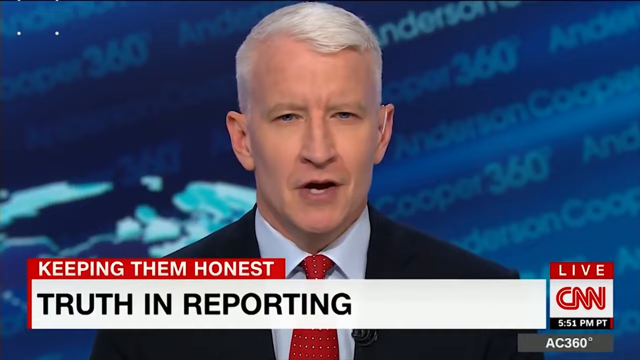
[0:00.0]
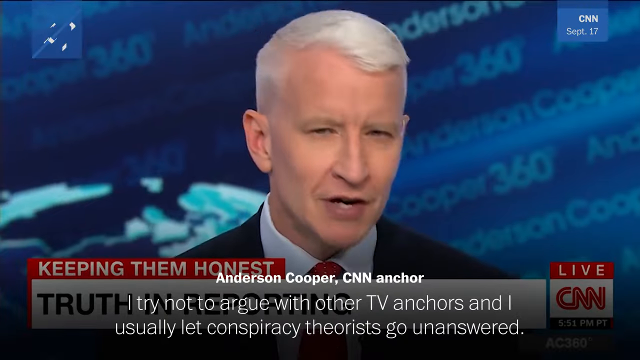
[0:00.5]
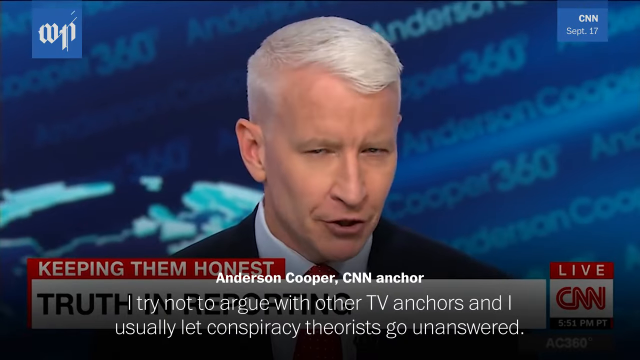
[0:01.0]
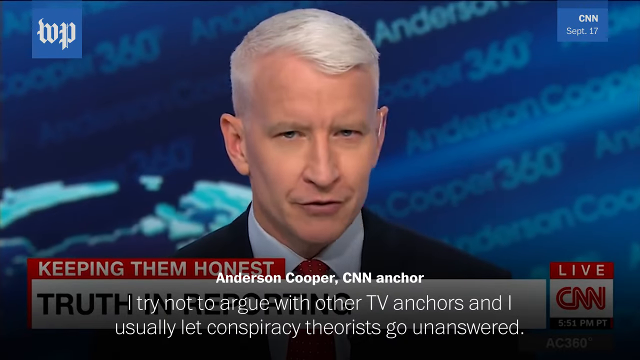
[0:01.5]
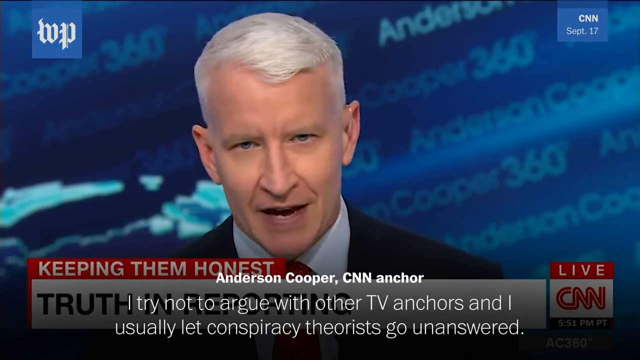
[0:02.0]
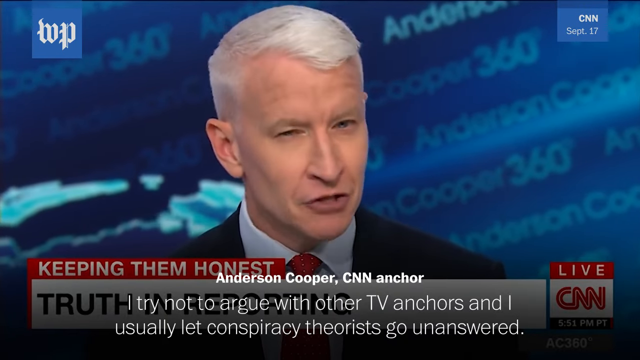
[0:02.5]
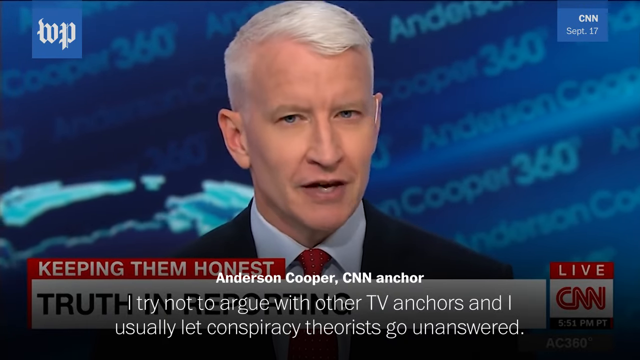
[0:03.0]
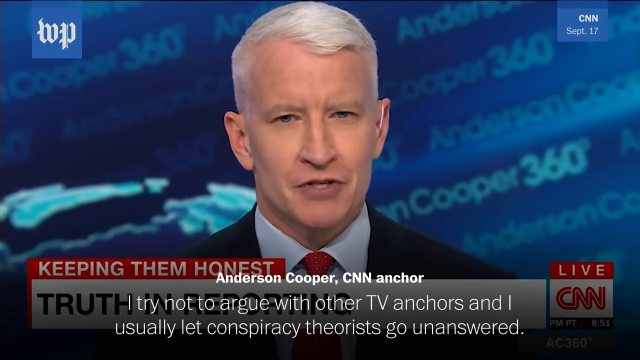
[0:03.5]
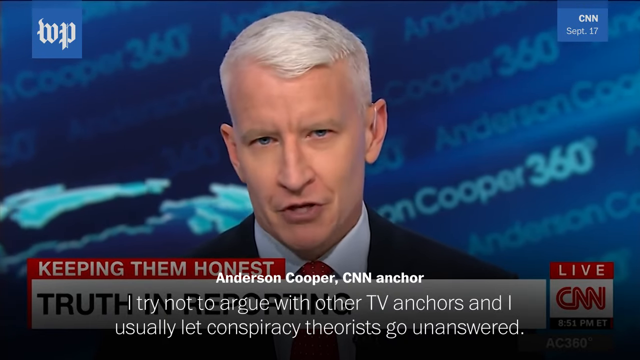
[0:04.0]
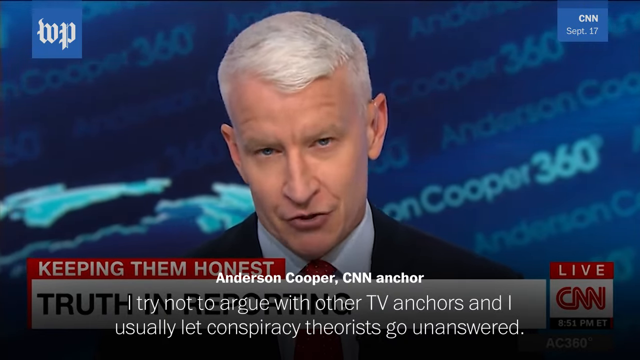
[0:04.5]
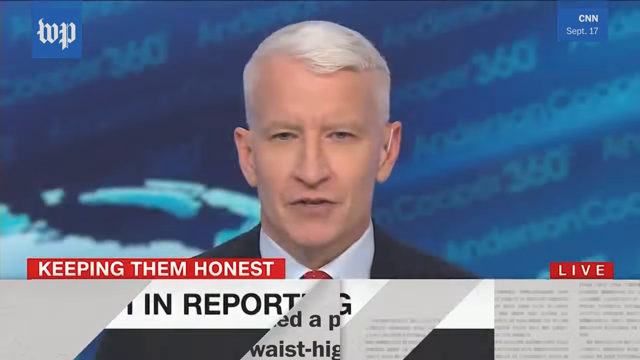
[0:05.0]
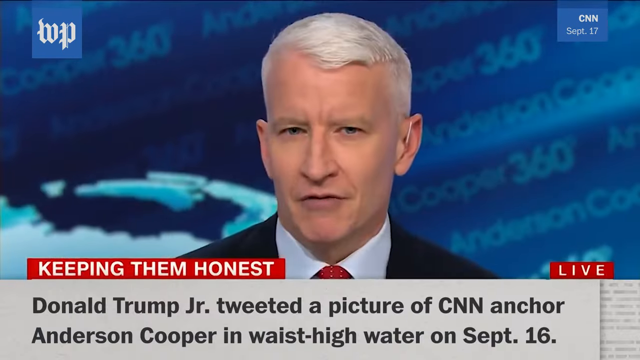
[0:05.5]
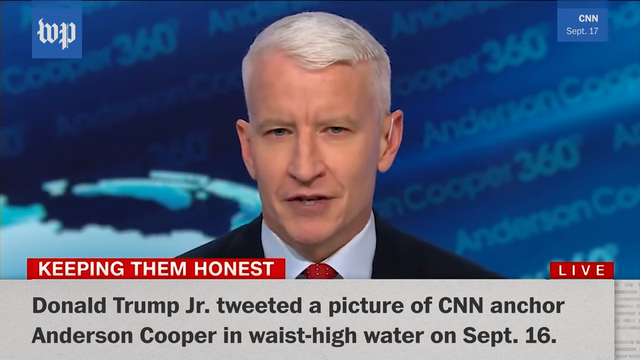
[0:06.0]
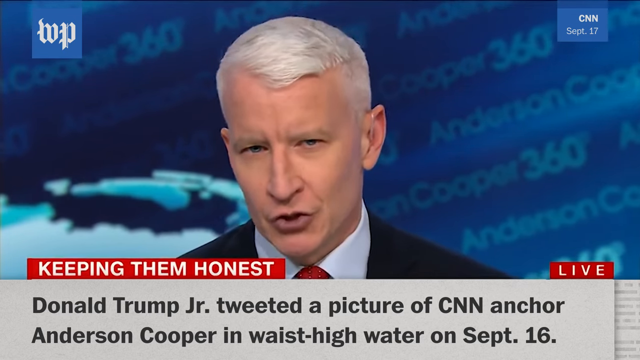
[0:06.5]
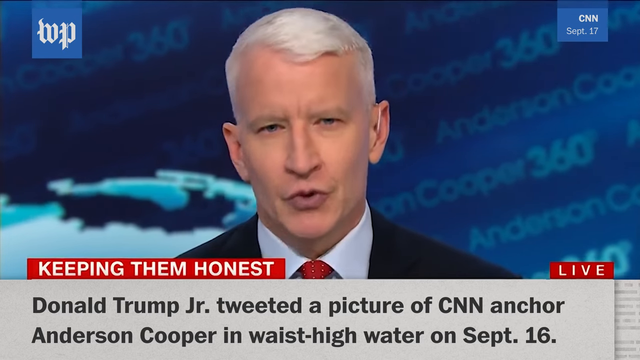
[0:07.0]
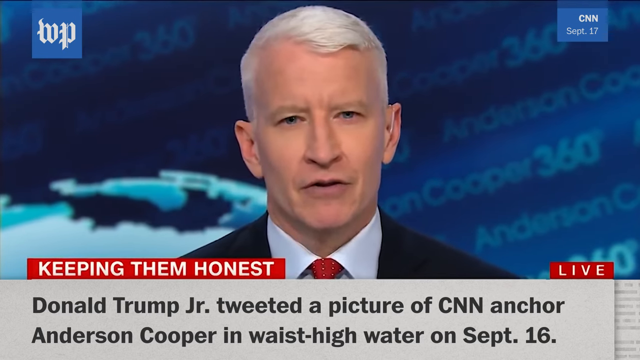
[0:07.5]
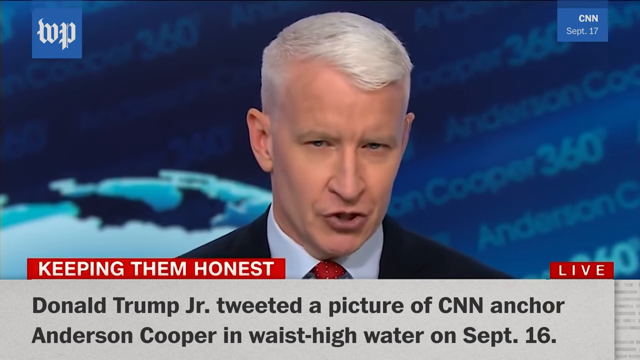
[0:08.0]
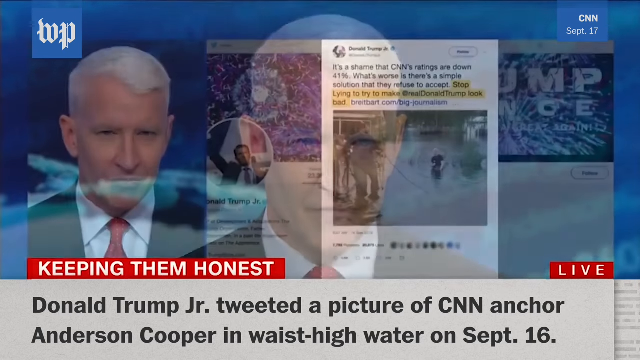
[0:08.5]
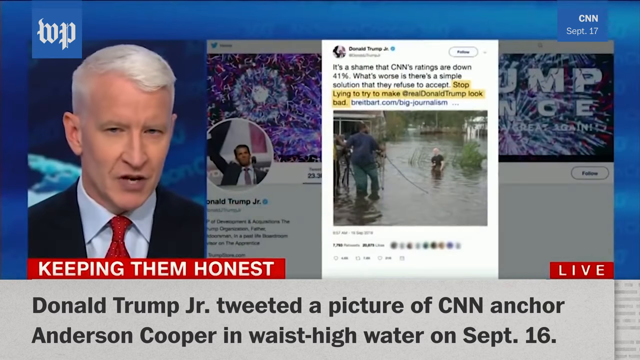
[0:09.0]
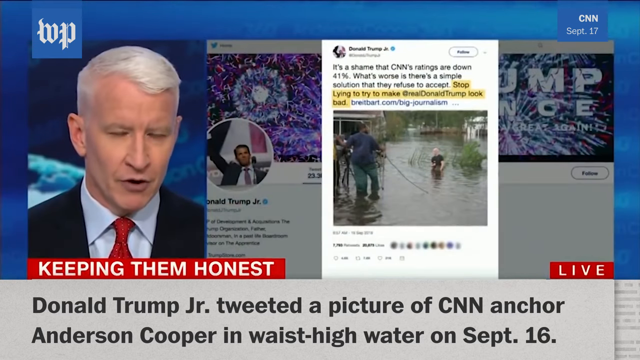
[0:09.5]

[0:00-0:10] A man with short gray hair, wearing a black suit with a red tie and a white undershirt, appears in a news-style video showing Anderson Cooper as a CNN anchor. White text on the screen reads "I try not to argue with other TV anchors and usually let conspiracy theorists go unanswered." The live CNN-style coverage shows "keeping them honest" and concerns Donald J. Trump tweeting out a picture of CNN anchor Anderson Cooper in waist-high waters on September 16th.